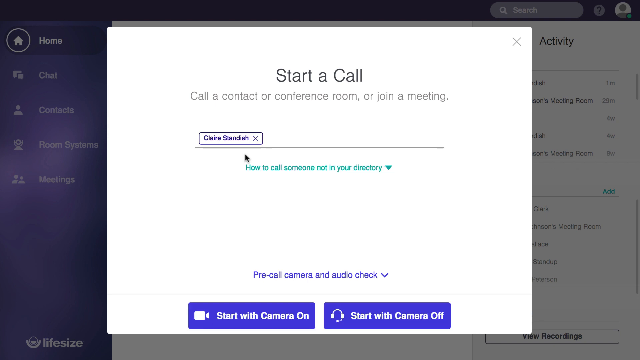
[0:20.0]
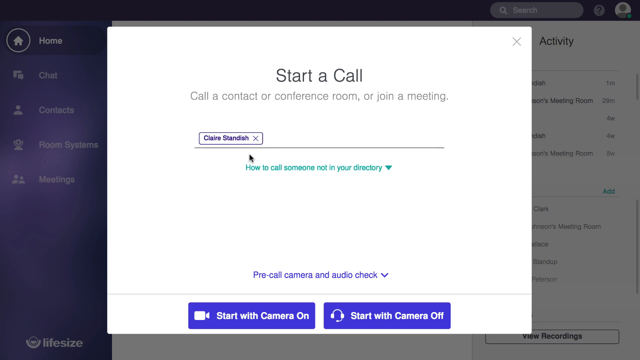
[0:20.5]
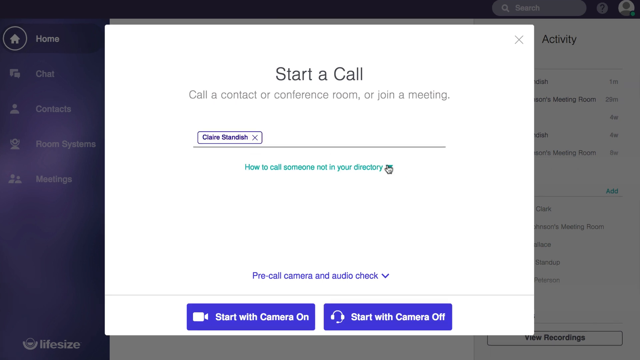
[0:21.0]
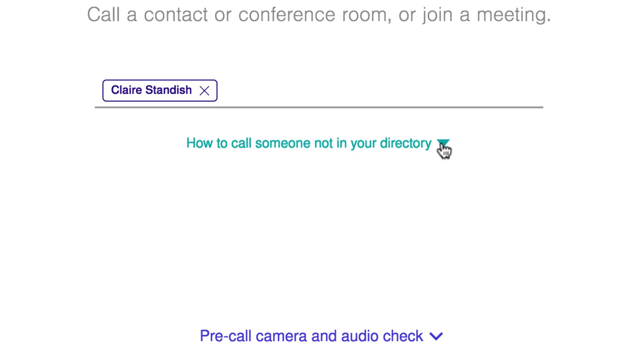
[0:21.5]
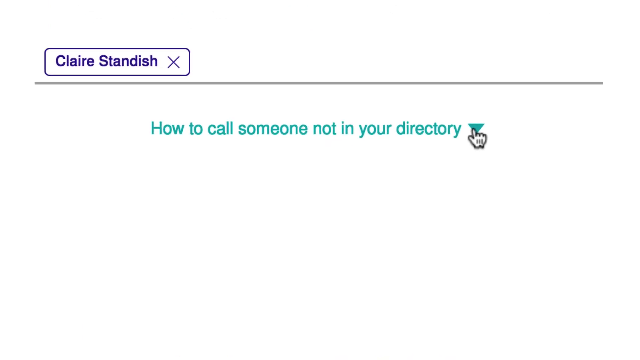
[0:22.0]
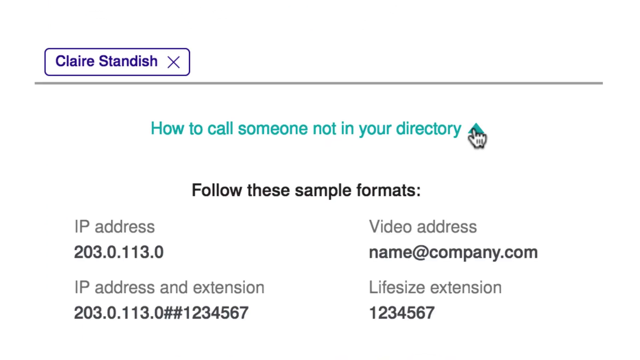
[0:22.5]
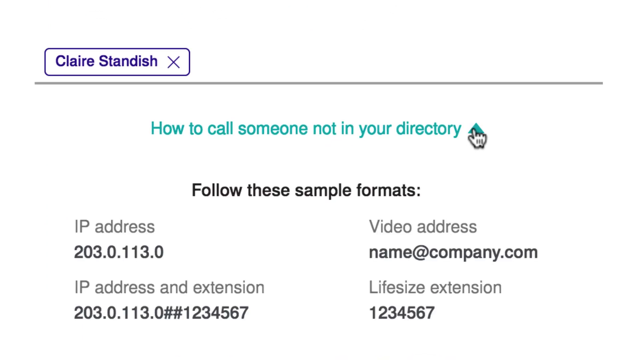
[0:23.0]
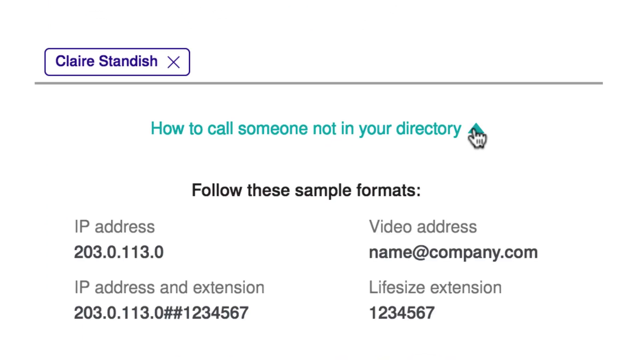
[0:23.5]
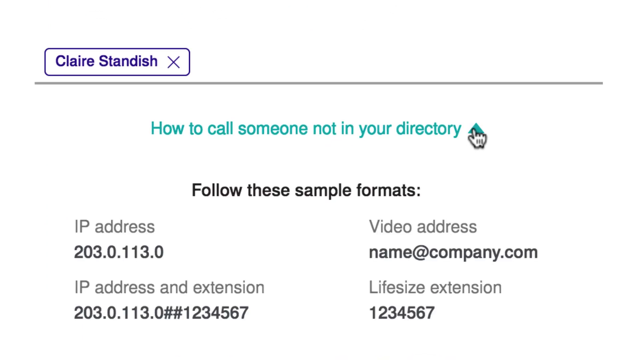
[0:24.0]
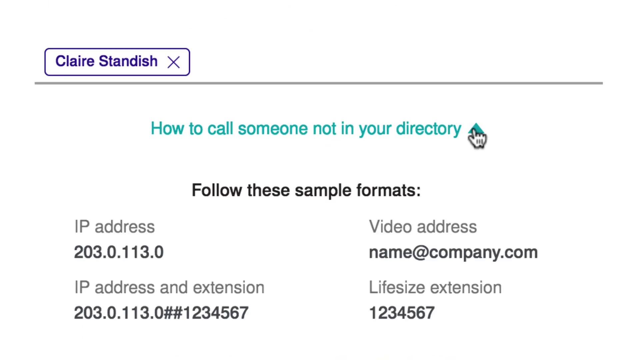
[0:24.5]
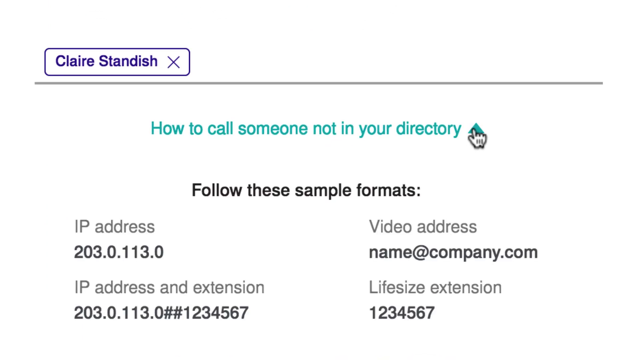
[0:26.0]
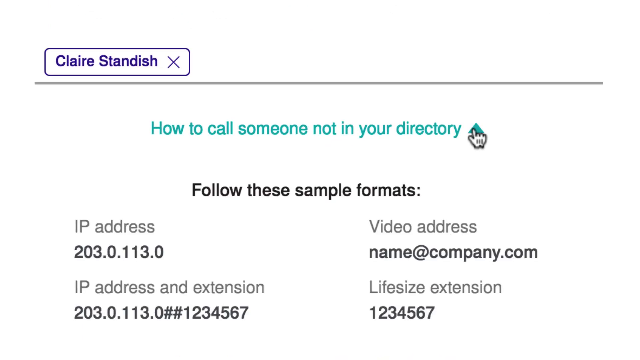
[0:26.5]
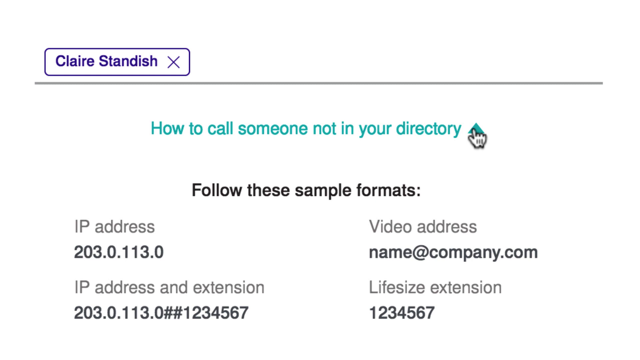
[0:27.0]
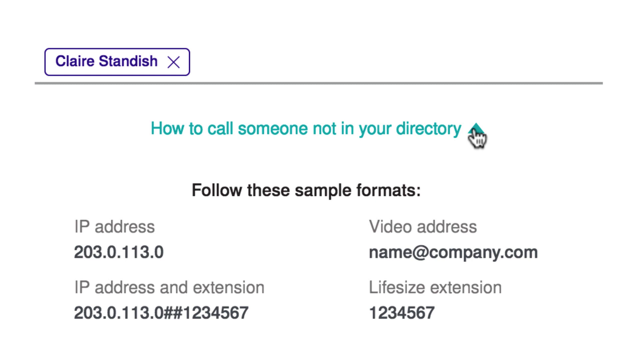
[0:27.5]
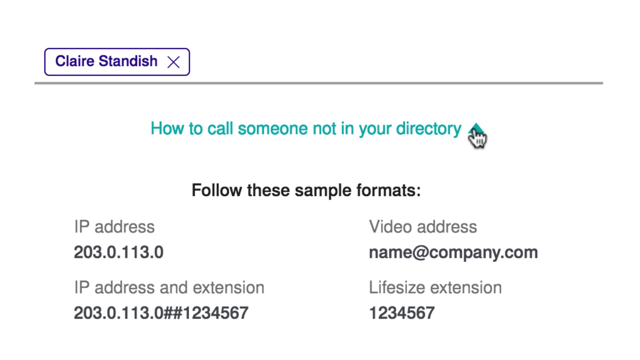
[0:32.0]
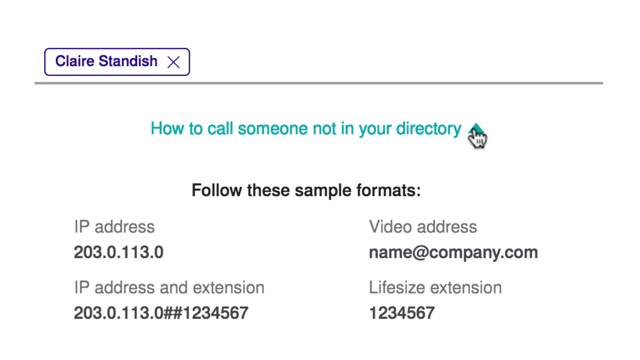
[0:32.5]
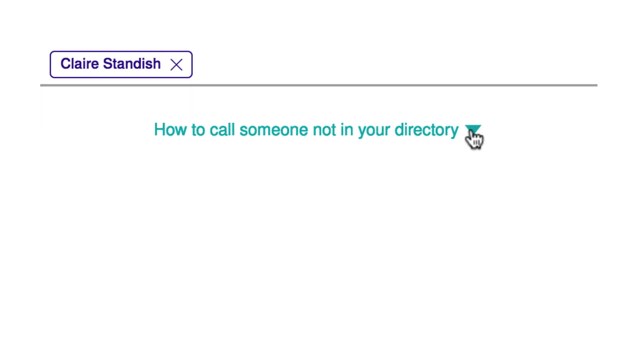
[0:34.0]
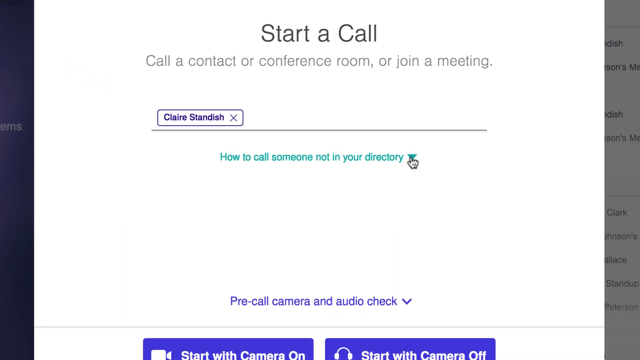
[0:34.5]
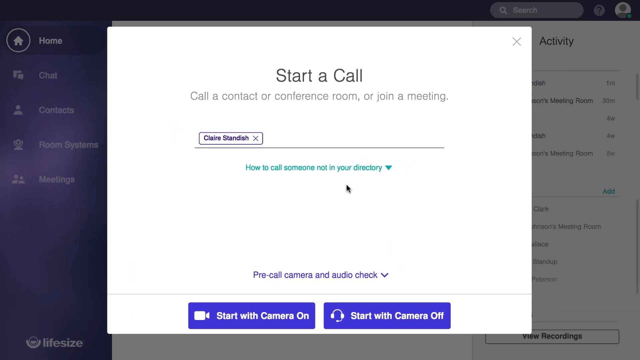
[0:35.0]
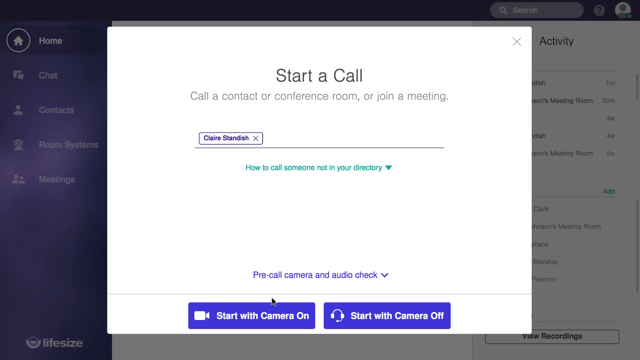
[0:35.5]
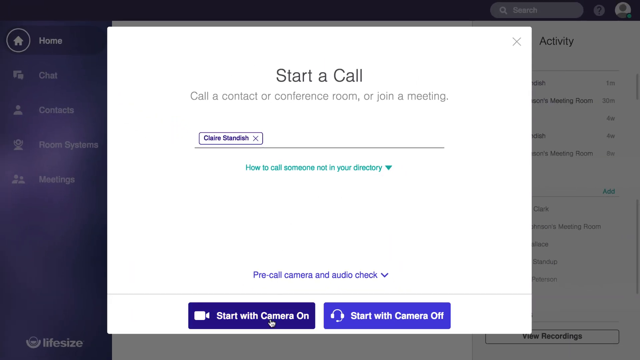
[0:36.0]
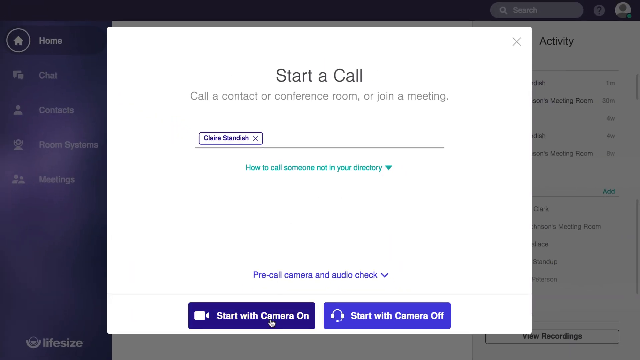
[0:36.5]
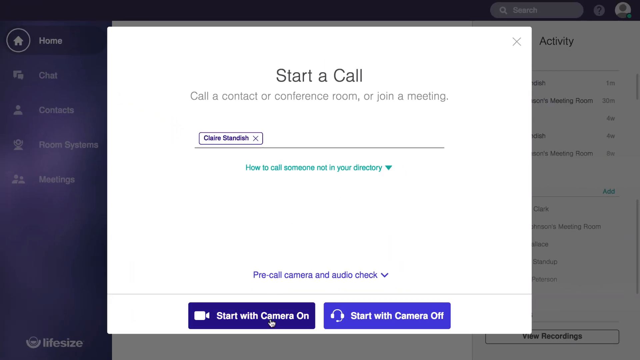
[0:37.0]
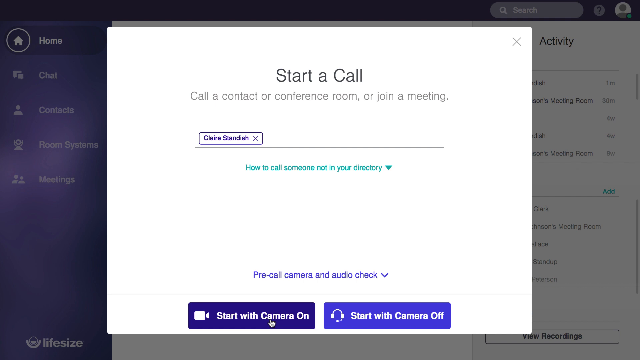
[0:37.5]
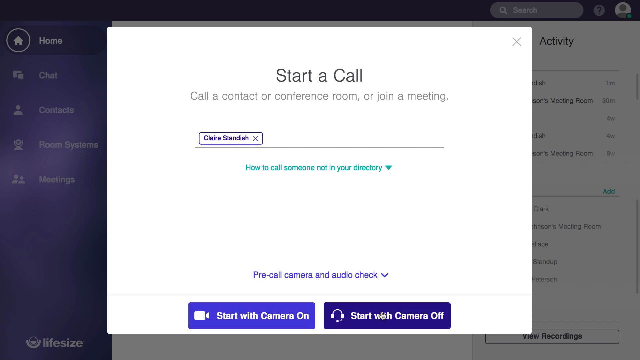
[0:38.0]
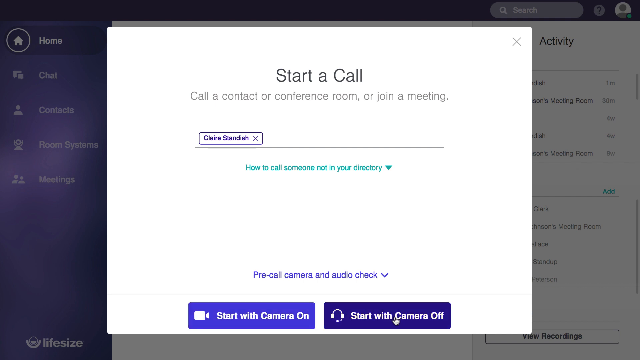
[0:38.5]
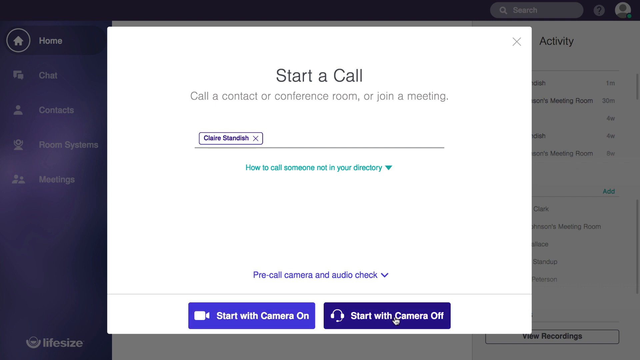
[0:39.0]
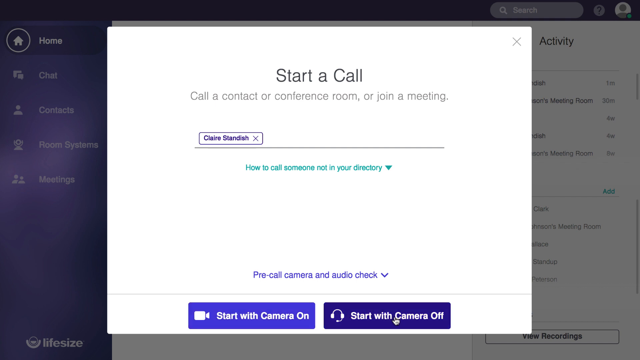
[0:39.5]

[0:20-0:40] A computer screen is running a program for calling or joining a conference room or meeting. The page is headed "Start a Call, Call a contact or conference room or join a meeting," and below that the name Claire Standish is in a text box on a line. Below that are directions reading "How to call someone not in your directory." At the bottom are two buttons: "Start with Camera On" with a little camera graphic on the left, and "Start with Camera Off" with a headset graphic on the right. The cursor clicks on "How to call someone not in your directory," and text reading "follow these sample formats" appears, with IP address, Video address, Lifesize extension, and IP address and extension listed below along with formats for each method of contacting someone. These disappear, the camera pulls back to show the full screen, and the cursor clicks on "Start with Camera Off."